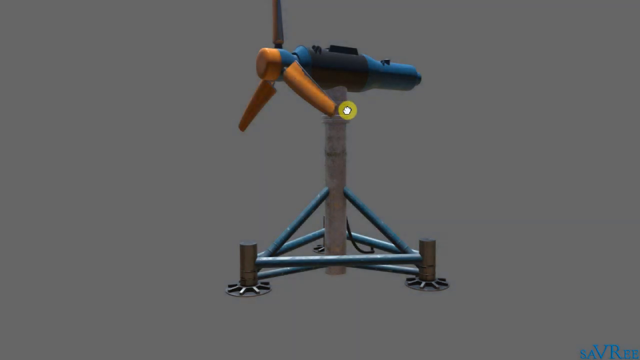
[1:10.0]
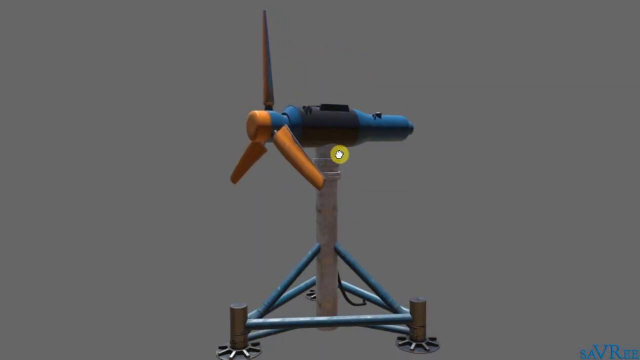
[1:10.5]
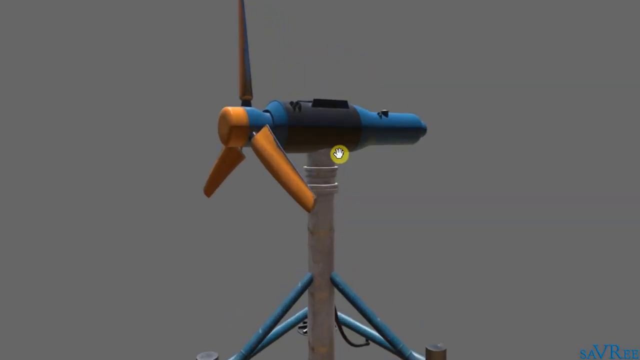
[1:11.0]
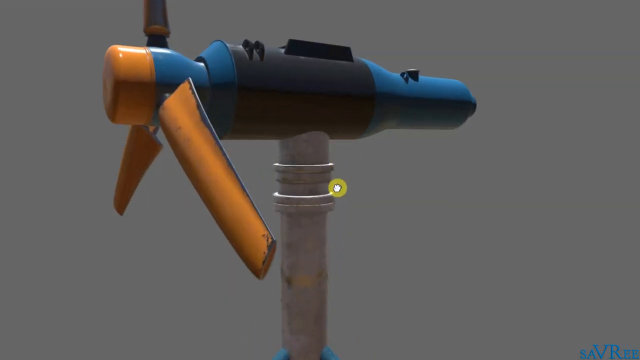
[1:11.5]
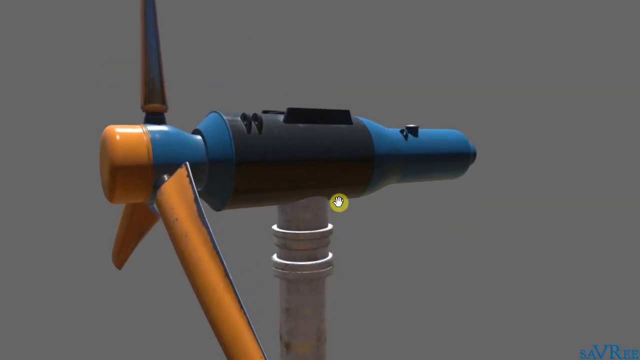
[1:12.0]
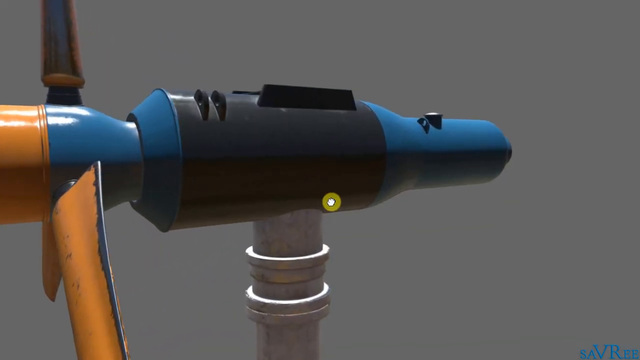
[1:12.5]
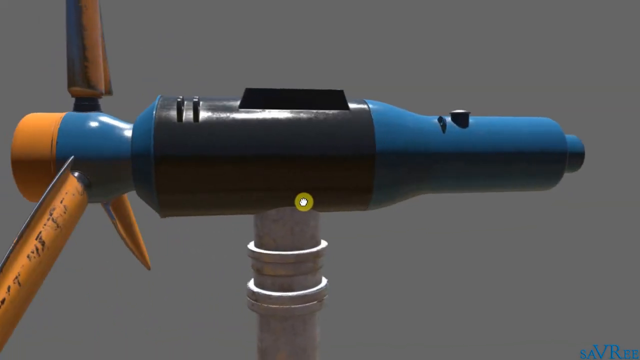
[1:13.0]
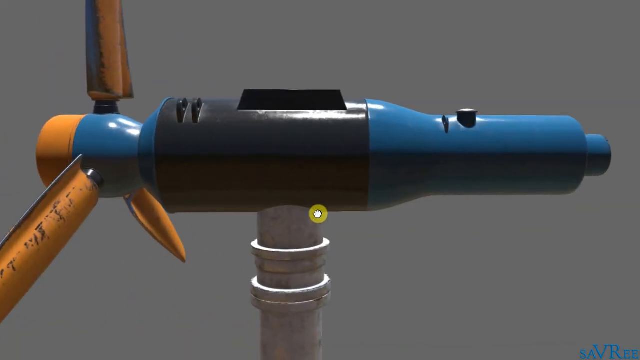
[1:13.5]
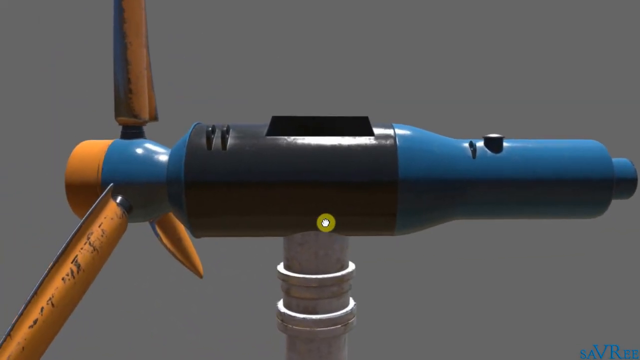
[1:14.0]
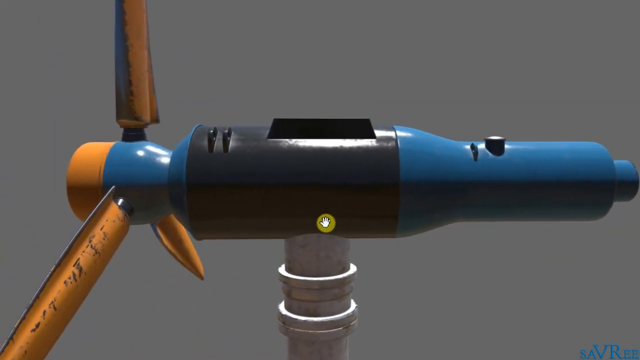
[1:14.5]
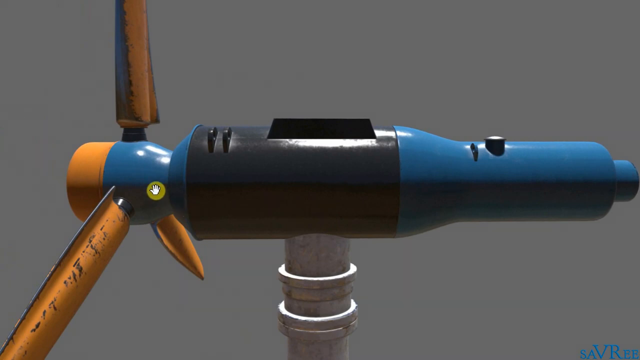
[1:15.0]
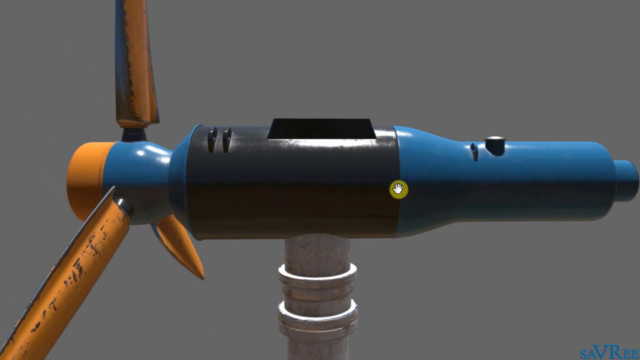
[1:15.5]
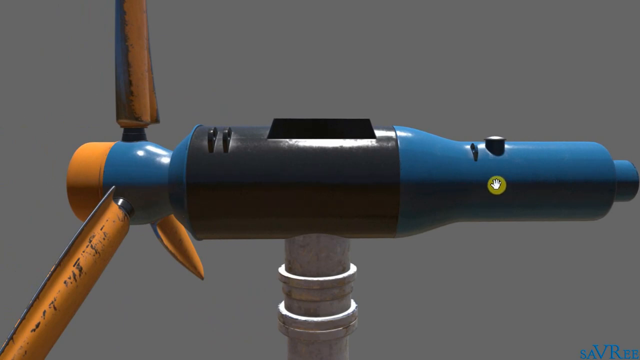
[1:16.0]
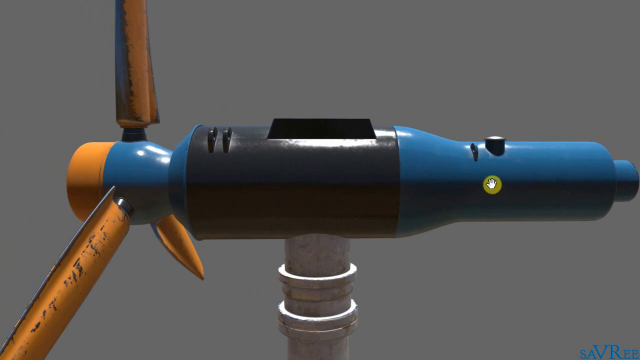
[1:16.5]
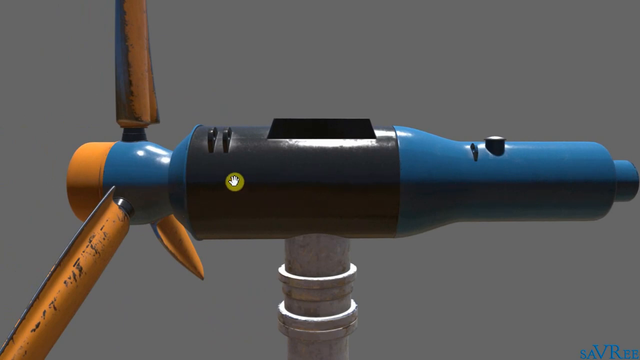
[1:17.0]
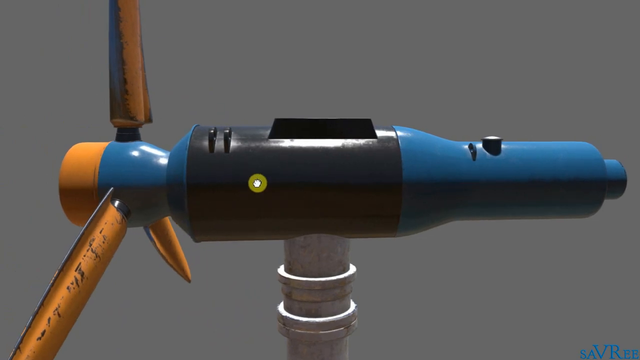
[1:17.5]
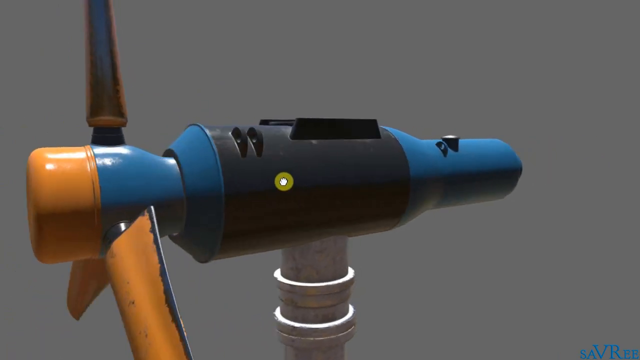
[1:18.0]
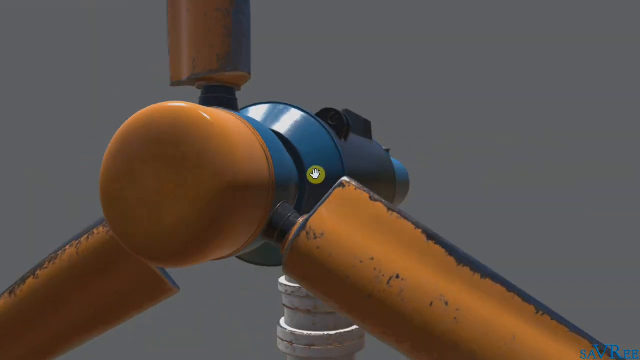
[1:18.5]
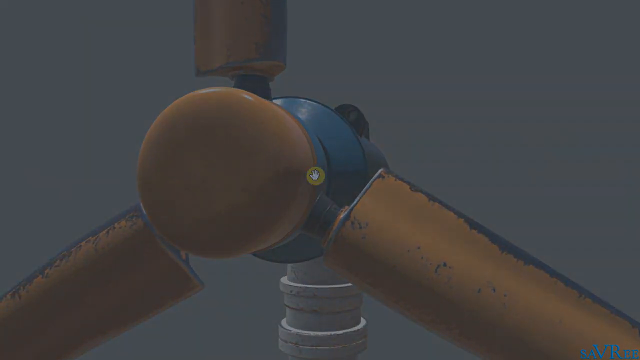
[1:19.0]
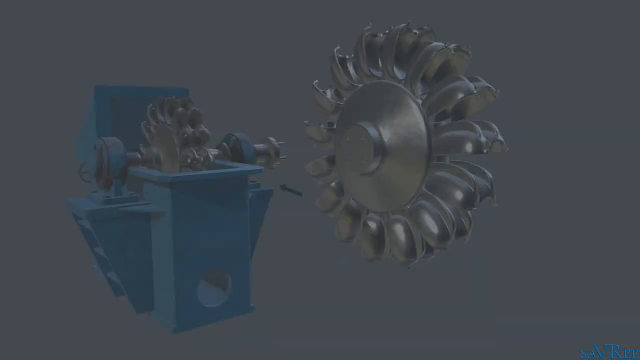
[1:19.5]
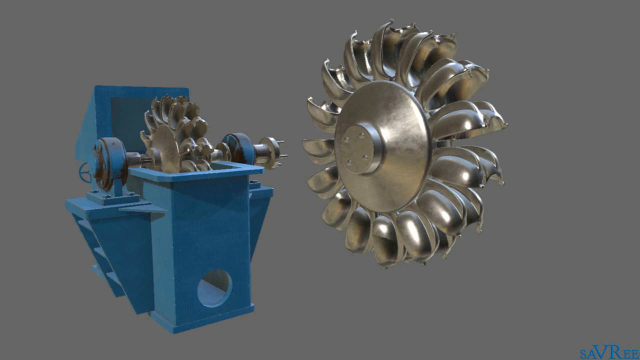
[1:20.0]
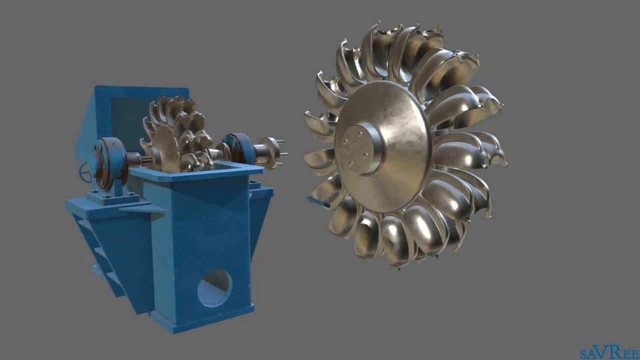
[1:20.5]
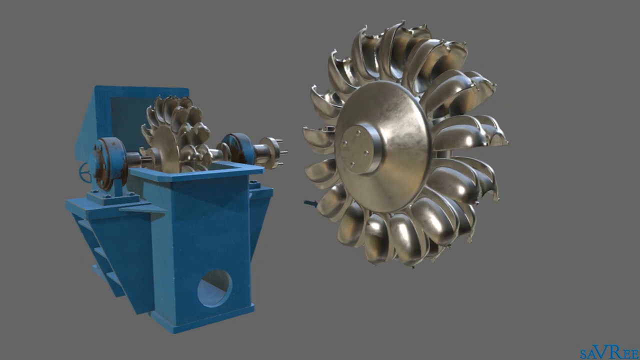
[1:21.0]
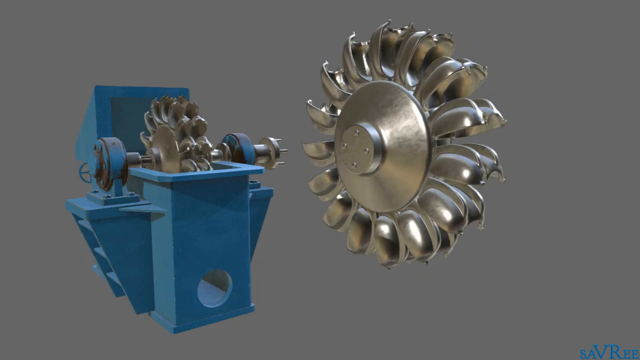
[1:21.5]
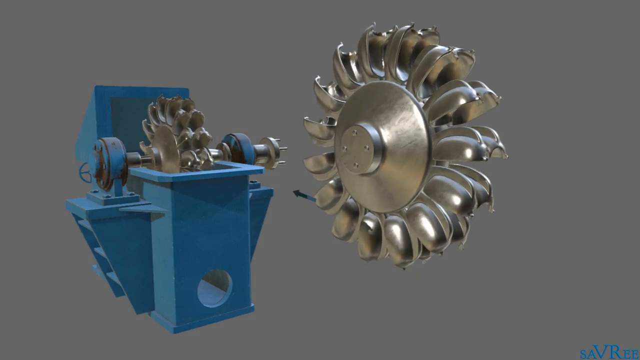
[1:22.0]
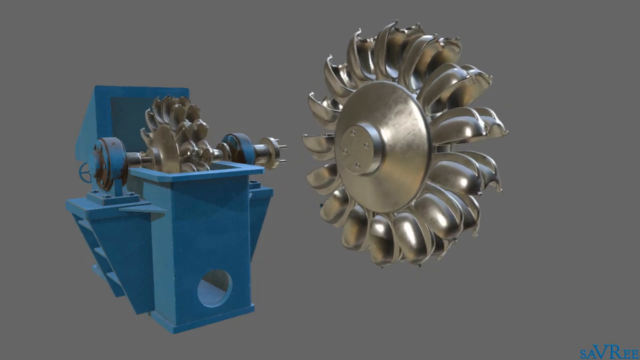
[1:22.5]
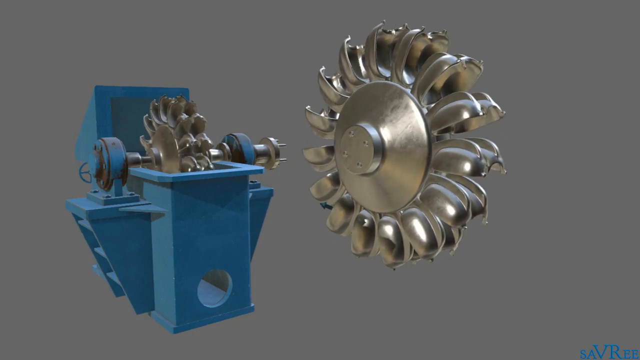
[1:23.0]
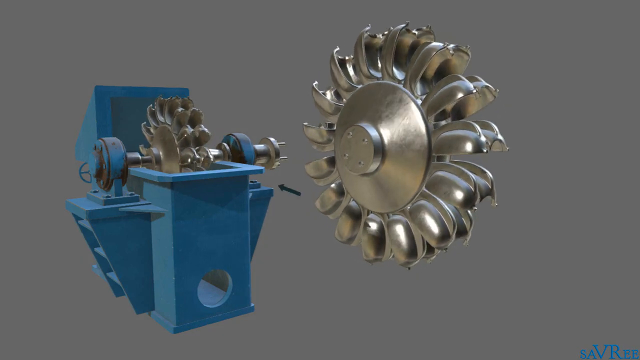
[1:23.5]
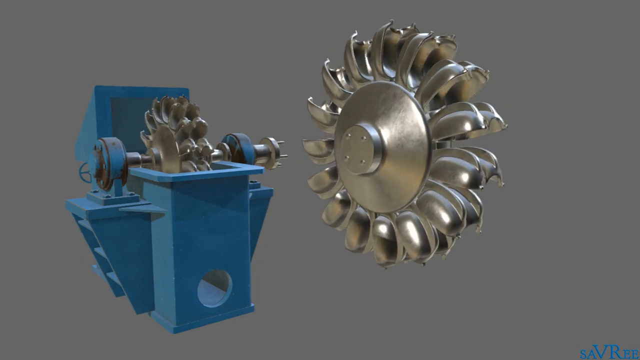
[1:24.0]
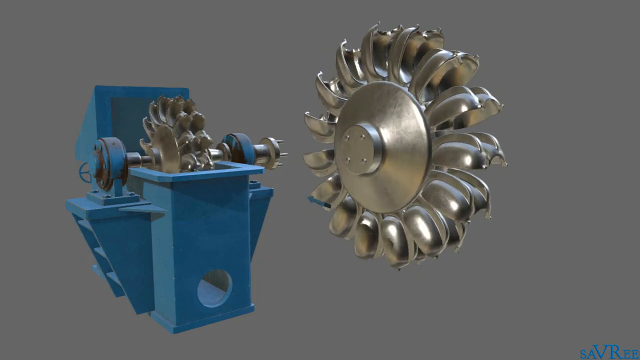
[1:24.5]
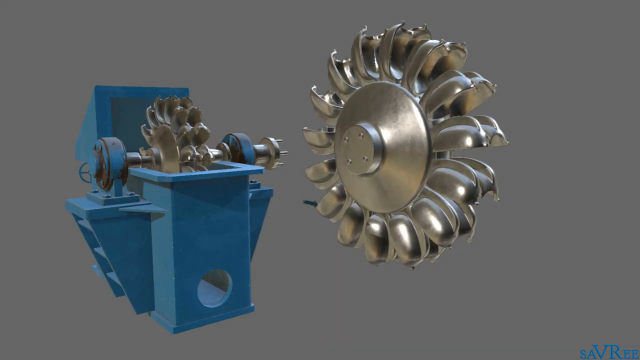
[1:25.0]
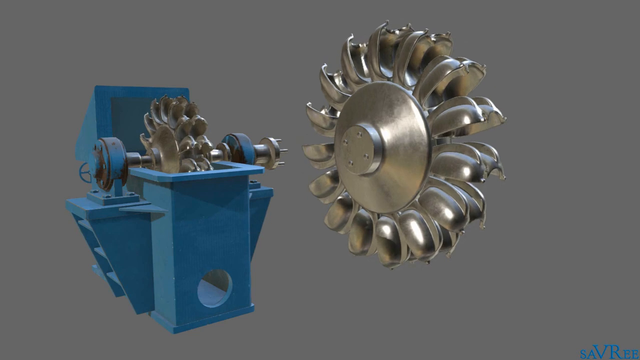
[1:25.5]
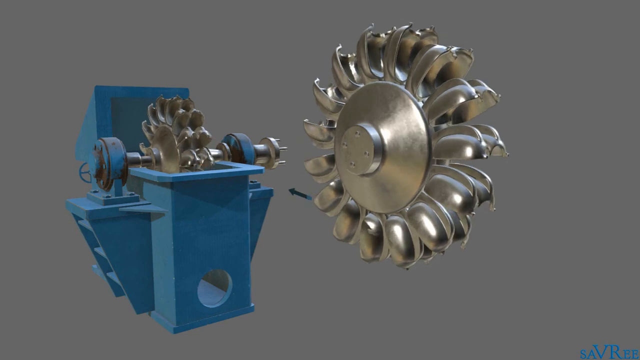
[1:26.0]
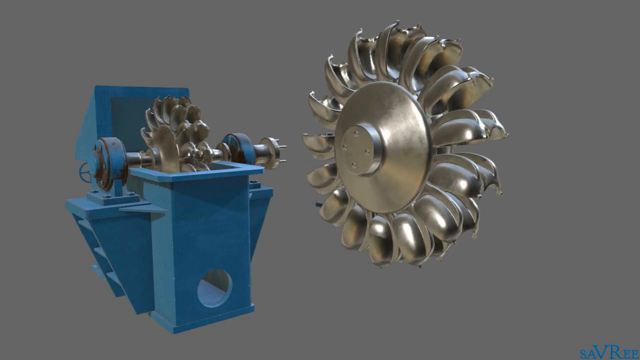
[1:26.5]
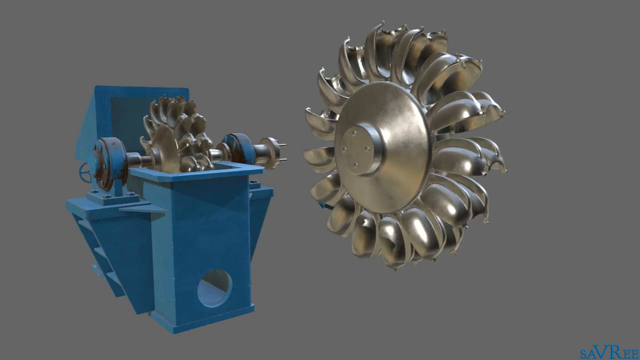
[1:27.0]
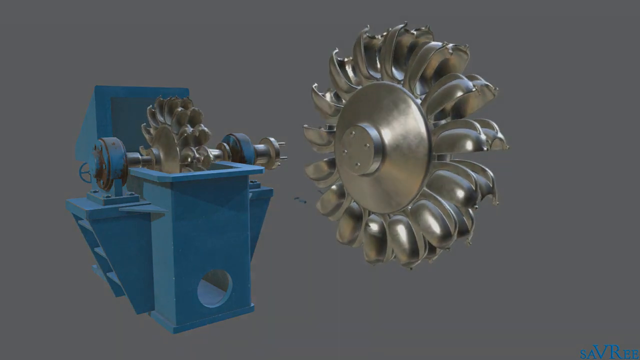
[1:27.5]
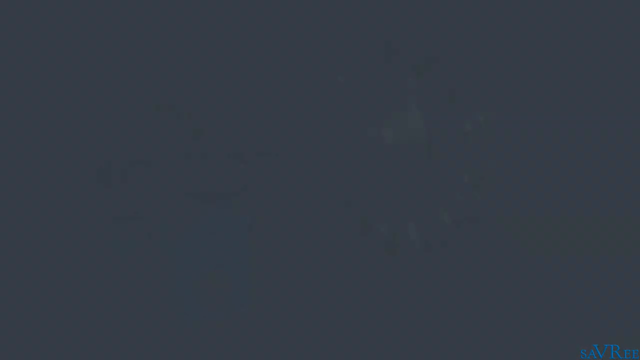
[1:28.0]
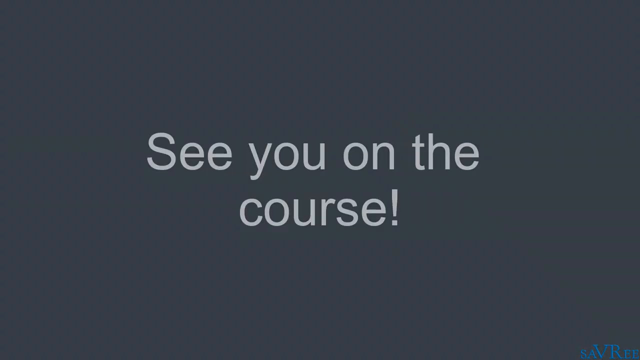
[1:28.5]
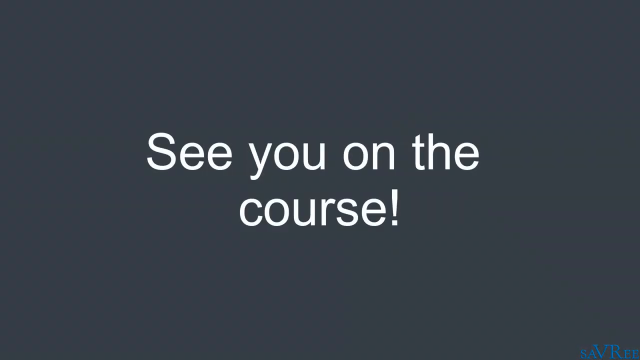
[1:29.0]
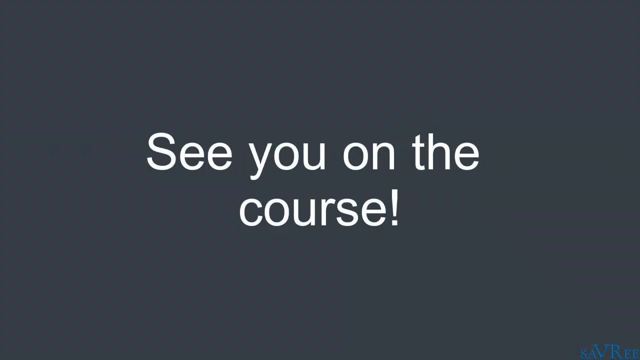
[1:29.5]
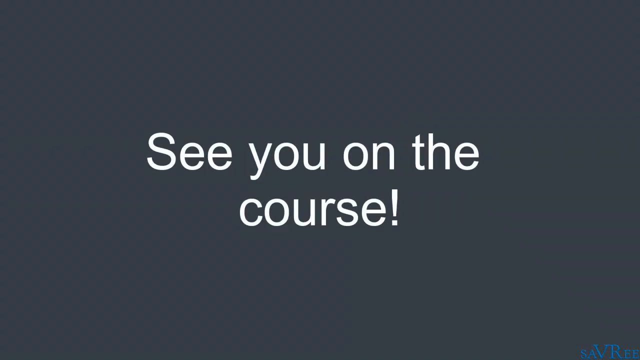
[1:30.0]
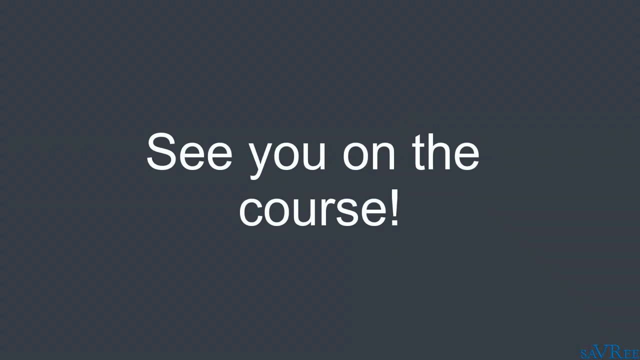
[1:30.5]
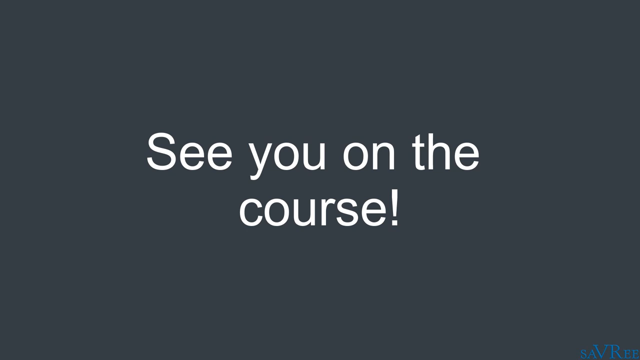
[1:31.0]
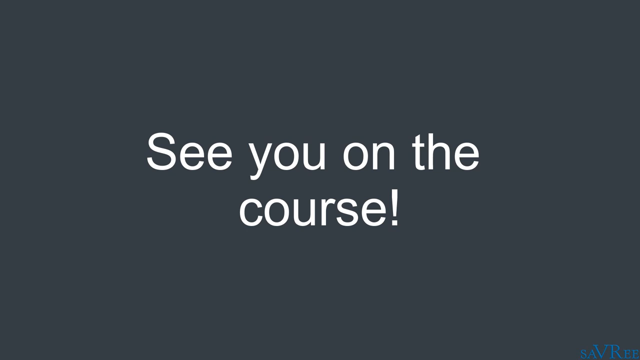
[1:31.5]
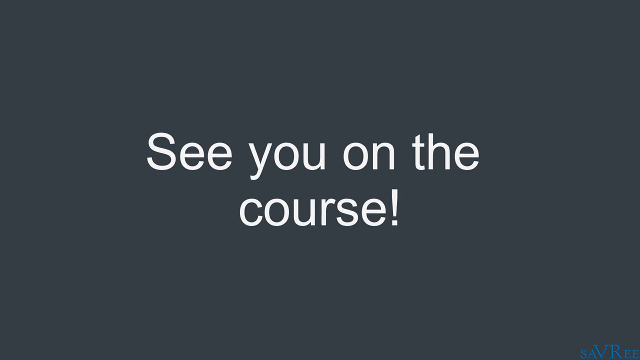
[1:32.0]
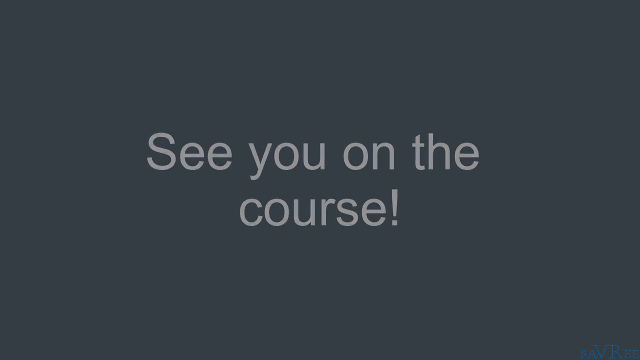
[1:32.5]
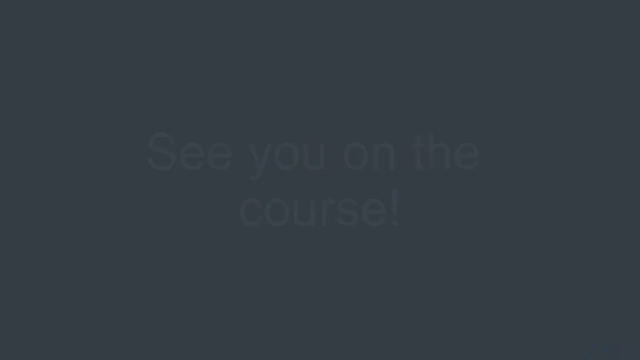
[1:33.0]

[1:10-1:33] The video transitions to a screen showing some sort of propeller on a kind of pole, a fan-like object with blades in a blue, black, and orange design; the propeller blades are orange, and the front of the propeller is orange as well. Another screen shows what almost looks like a steel gear, cogwheel, or propeller, with the steel propeller in some sort of blue contraption or device and arrows going between them. A dark gray screen then displays white text reading "see you on the course!" No physical subjects are depicted.